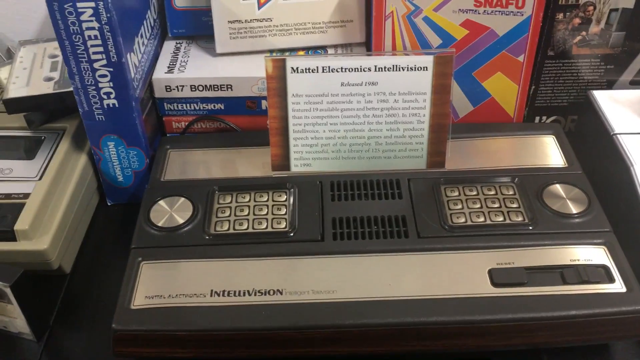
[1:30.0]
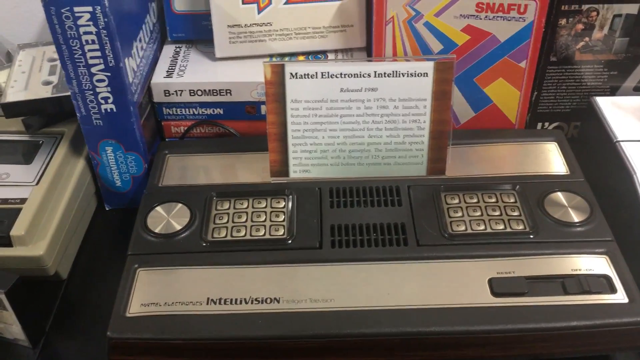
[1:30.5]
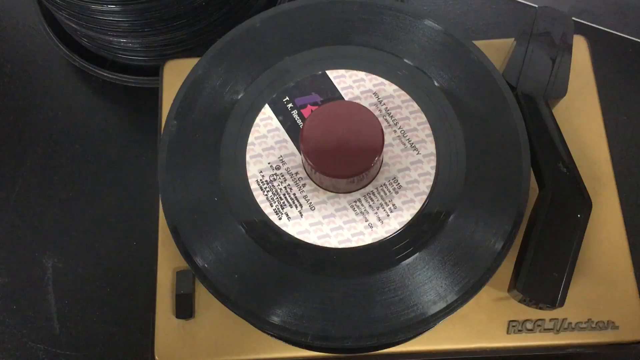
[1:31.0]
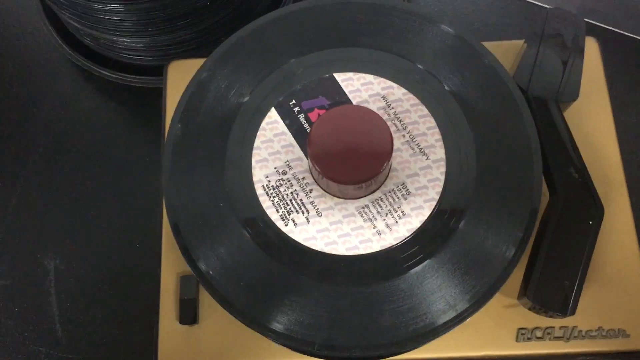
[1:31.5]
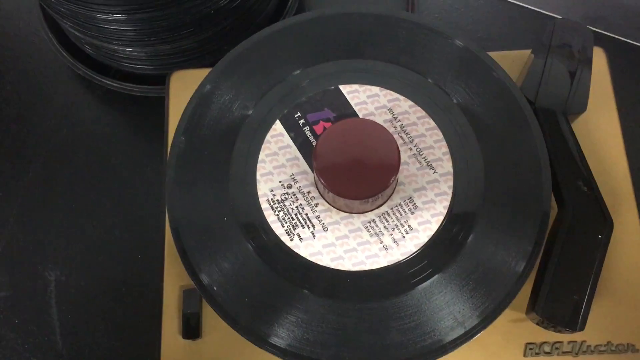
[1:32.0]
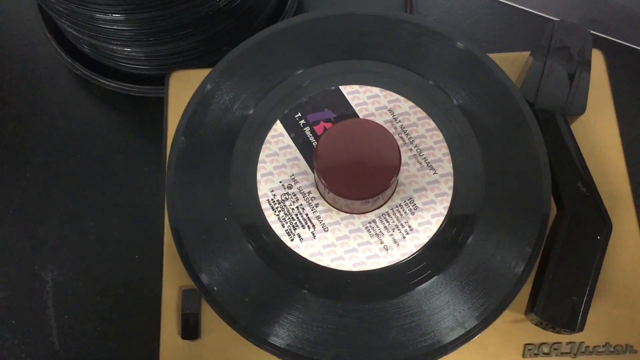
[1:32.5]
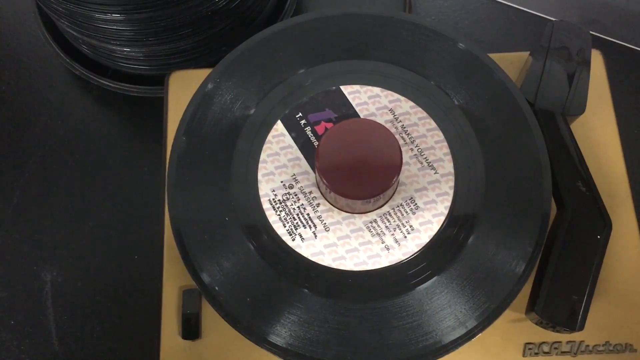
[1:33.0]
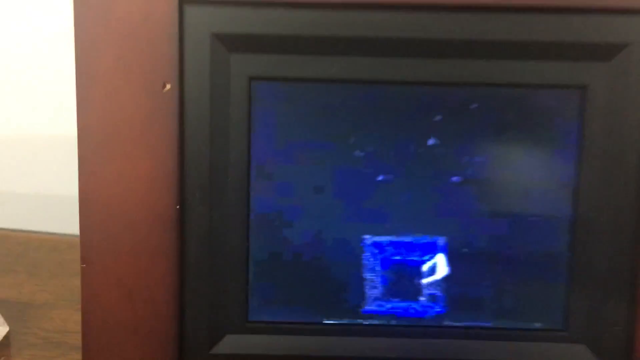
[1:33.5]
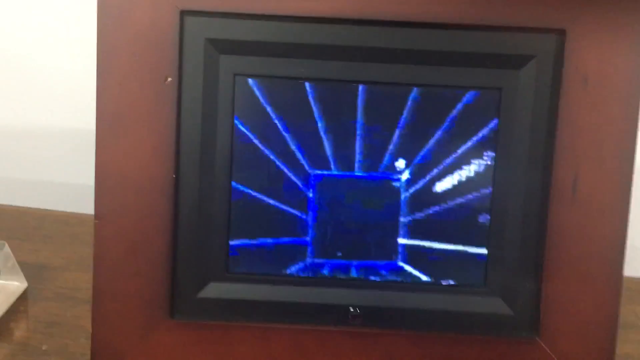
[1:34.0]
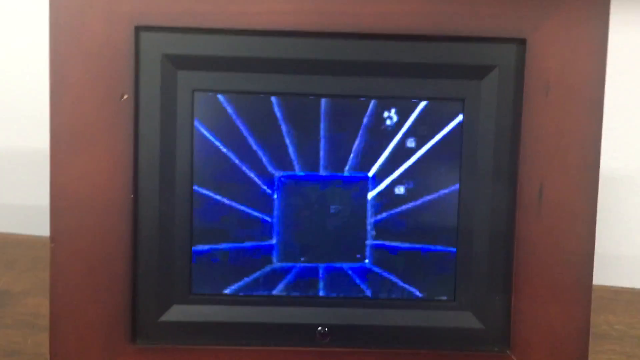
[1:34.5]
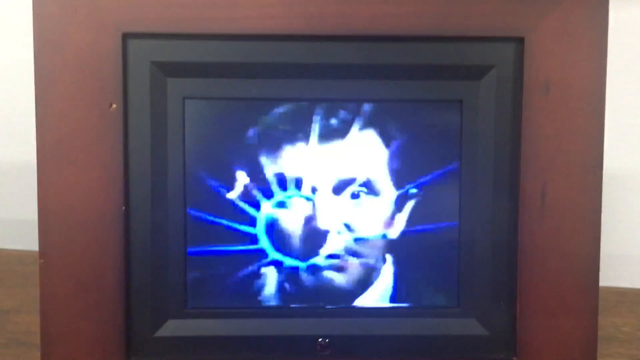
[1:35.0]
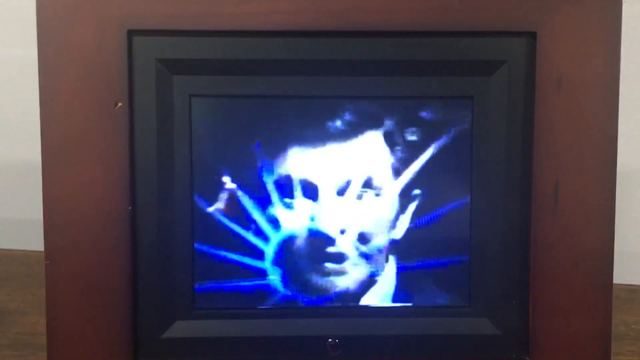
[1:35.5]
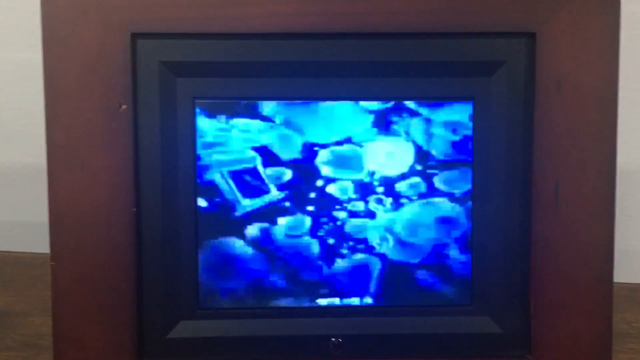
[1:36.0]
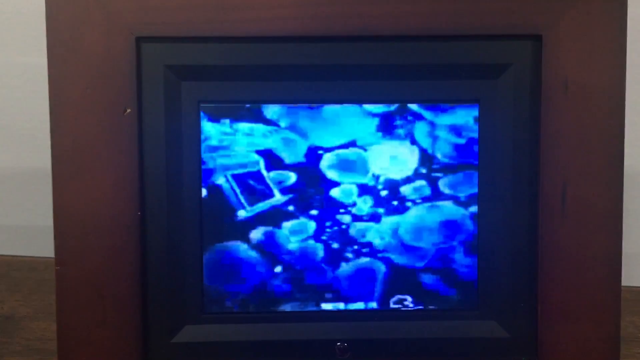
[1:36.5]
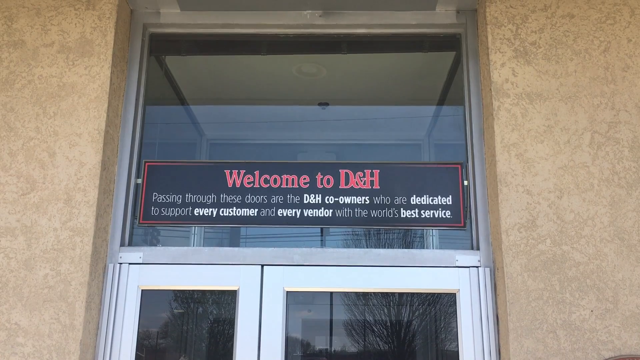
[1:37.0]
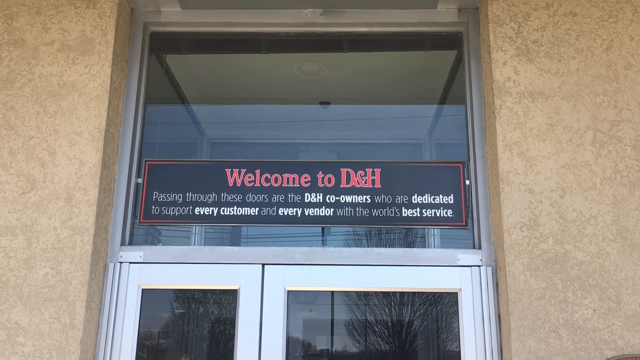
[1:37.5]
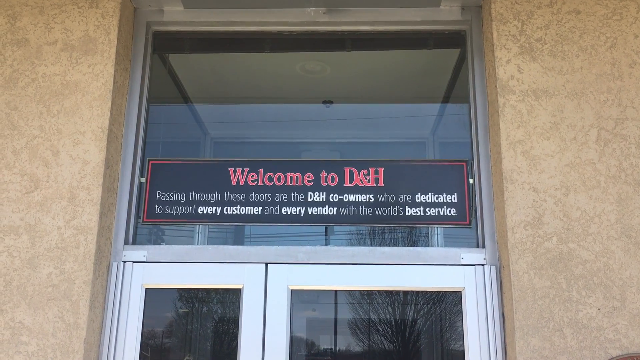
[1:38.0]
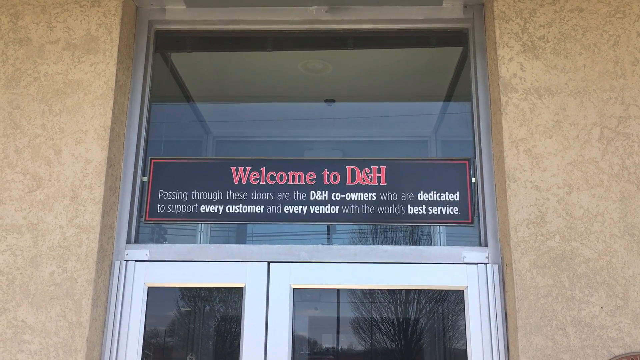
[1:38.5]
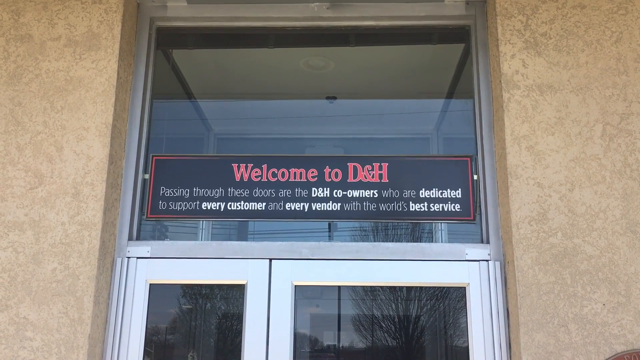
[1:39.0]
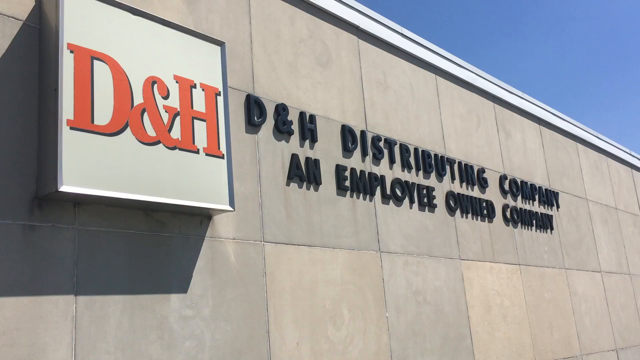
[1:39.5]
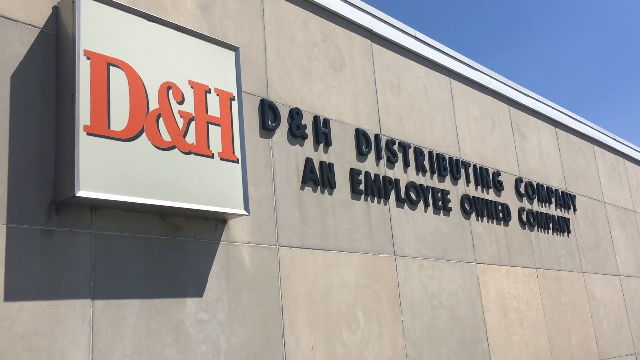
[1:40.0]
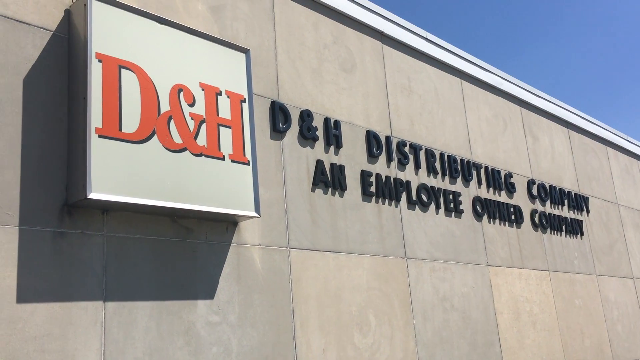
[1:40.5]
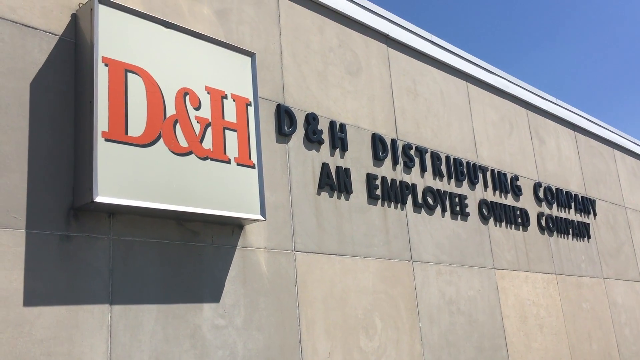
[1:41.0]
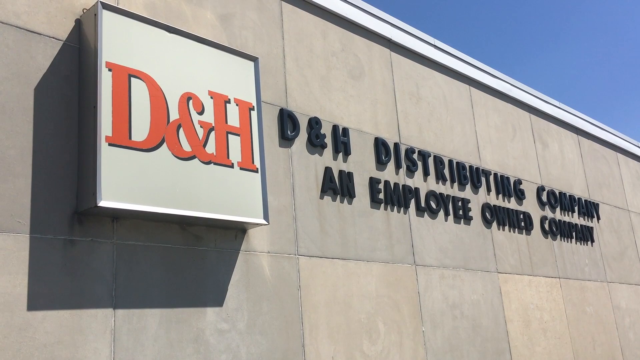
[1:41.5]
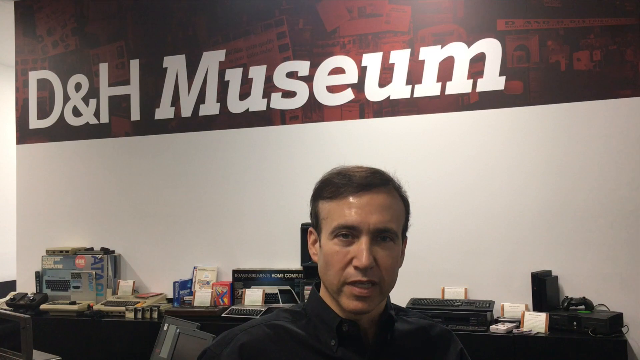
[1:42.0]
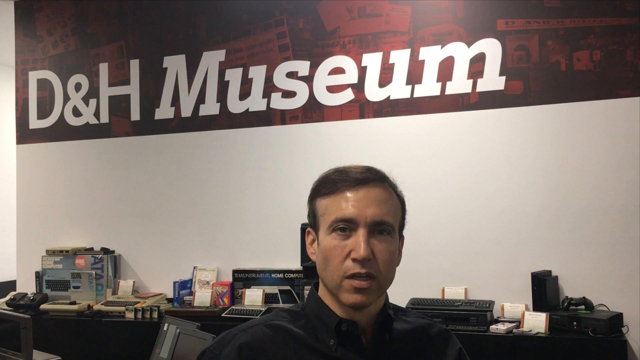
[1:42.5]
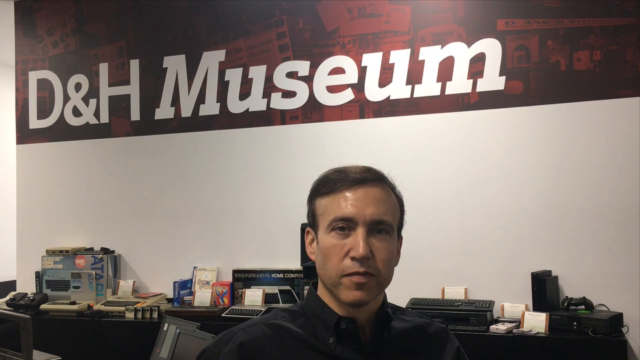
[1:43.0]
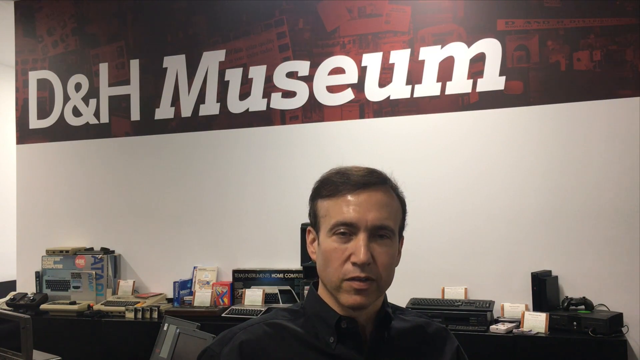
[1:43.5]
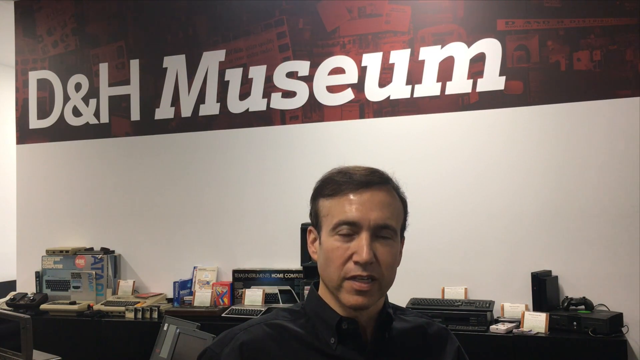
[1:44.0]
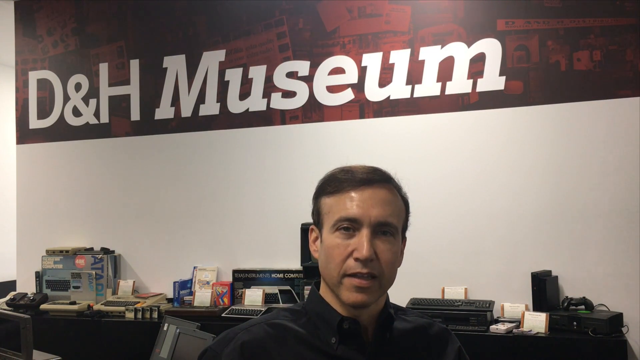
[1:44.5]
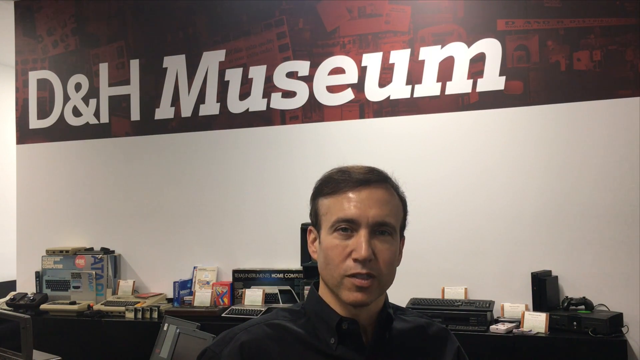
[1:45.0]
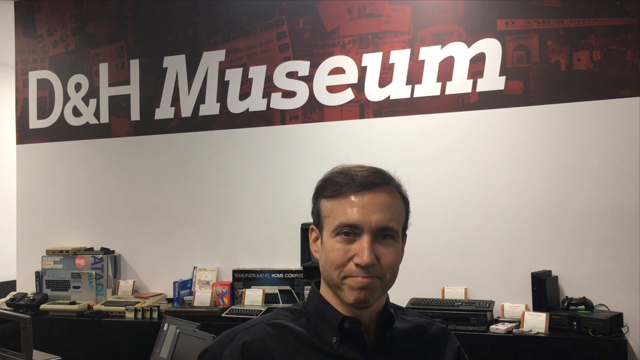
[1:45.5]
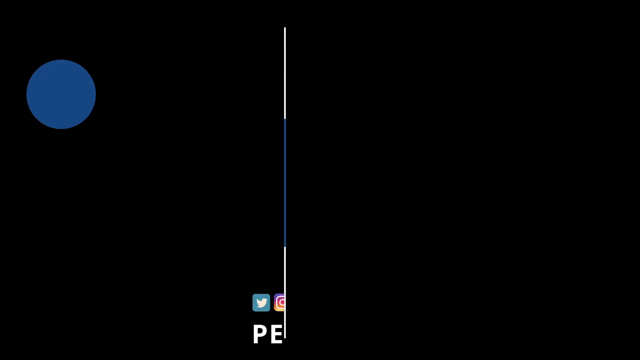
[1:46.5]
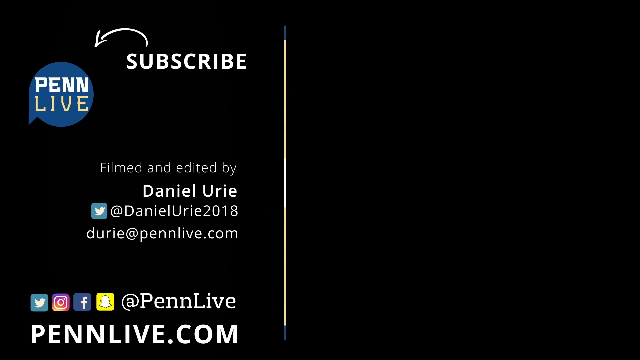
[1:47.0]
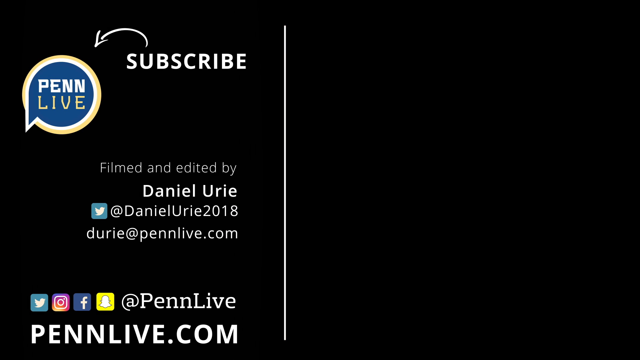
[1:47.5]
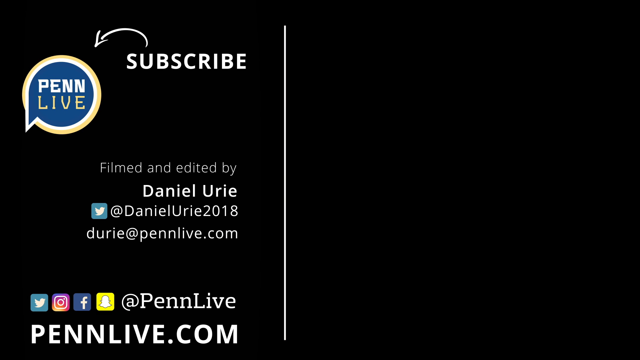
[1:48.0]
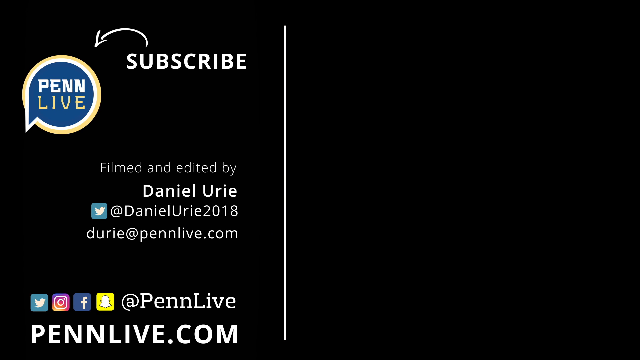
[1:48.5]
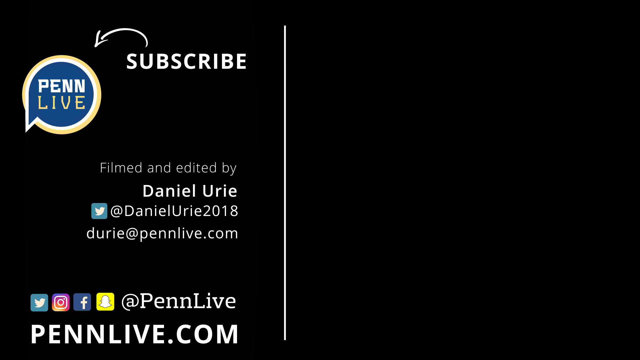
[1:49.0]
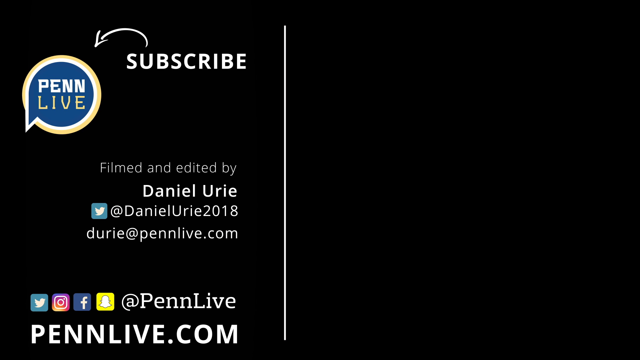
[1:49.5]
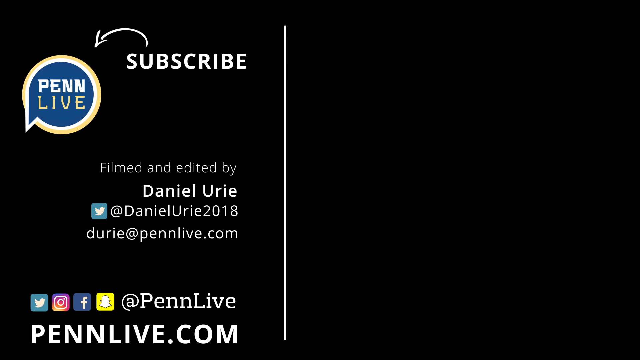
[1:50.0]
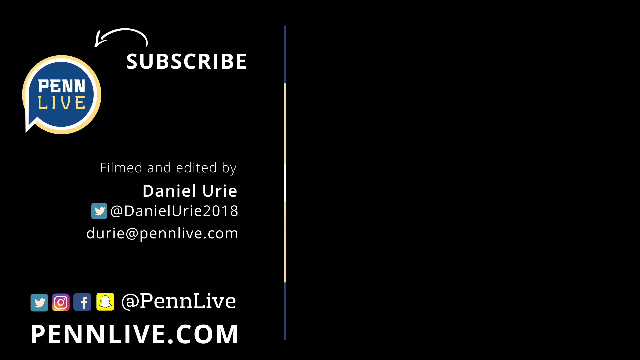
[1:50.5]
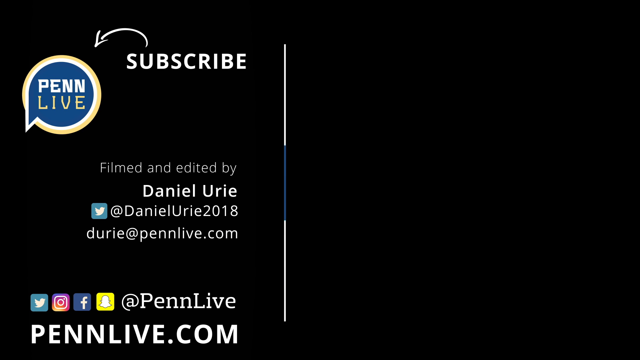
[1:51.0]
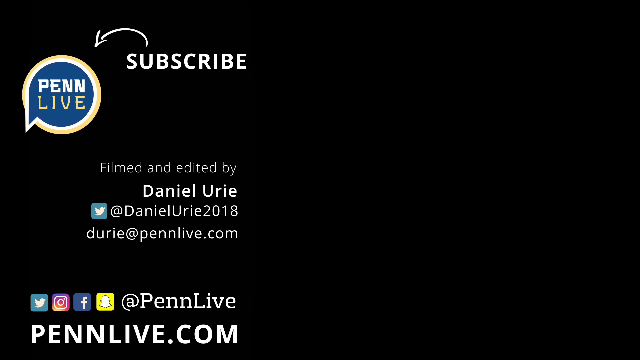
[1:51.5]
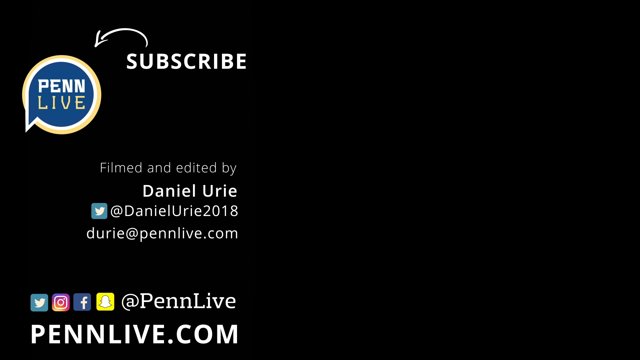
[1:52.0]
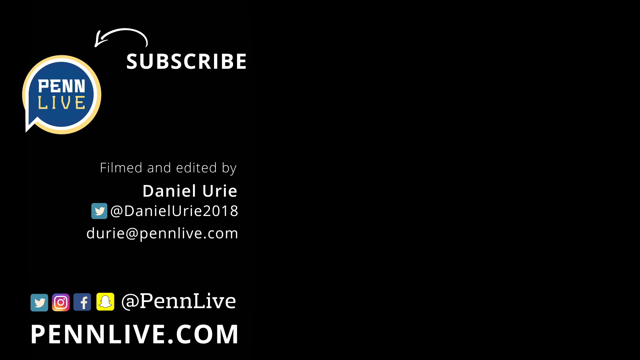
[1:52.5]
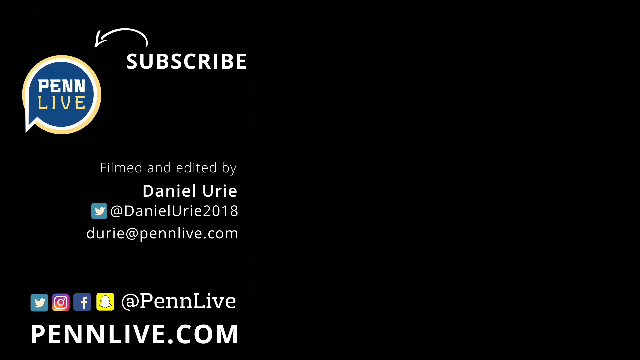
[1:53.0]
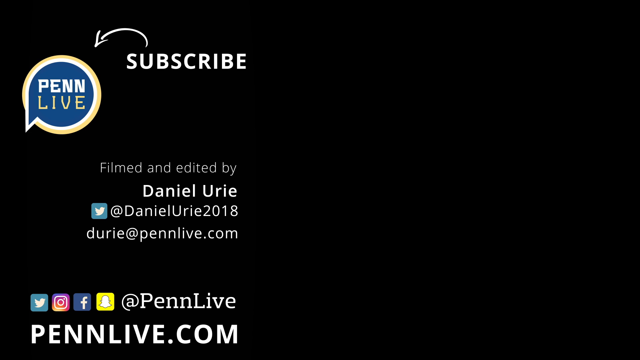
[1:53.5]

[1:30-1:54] More machinery appears, including a B-17 bomber, what seem to be metal electronics in a television, something that seems to be RAM, and a very small television. A welcome to D&H distributive company follows, suggesting the company built this museum of old technology and devices. The closing credits mention PEN Live, subscribe, filmed and edited by Daniel Ulrich, a Twitter account for Daniel Ulrich 2018 spelled D-U-R-I-E, and PENLive.com.